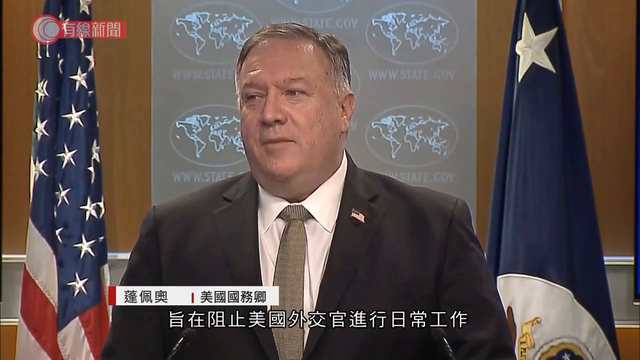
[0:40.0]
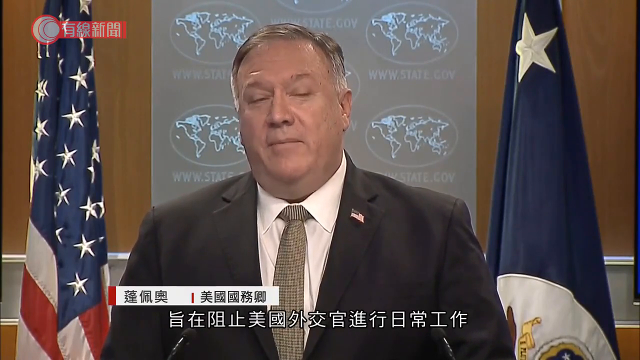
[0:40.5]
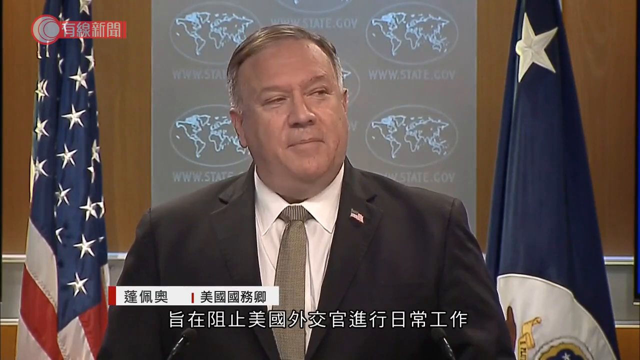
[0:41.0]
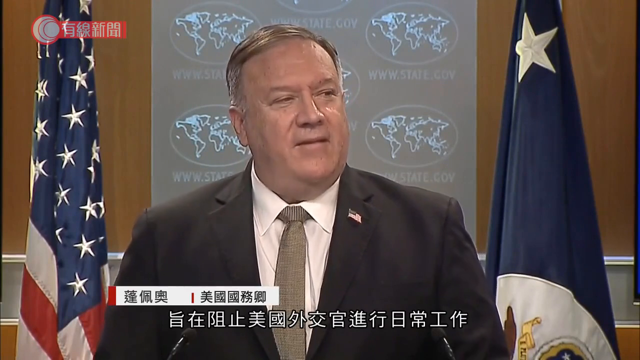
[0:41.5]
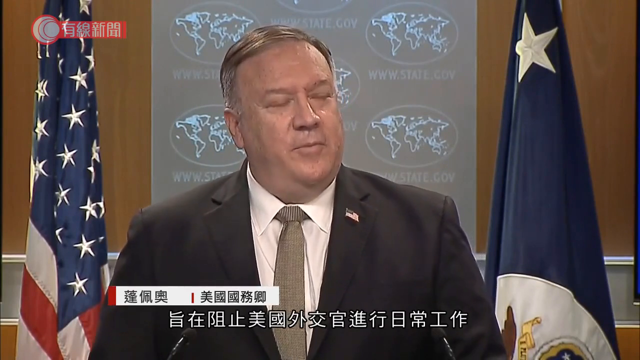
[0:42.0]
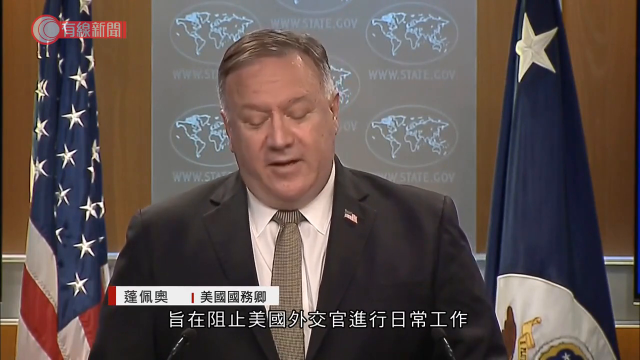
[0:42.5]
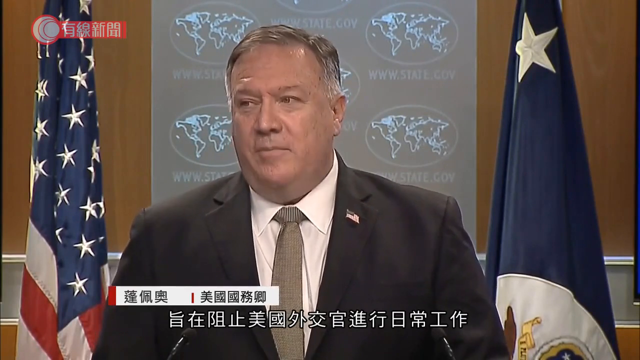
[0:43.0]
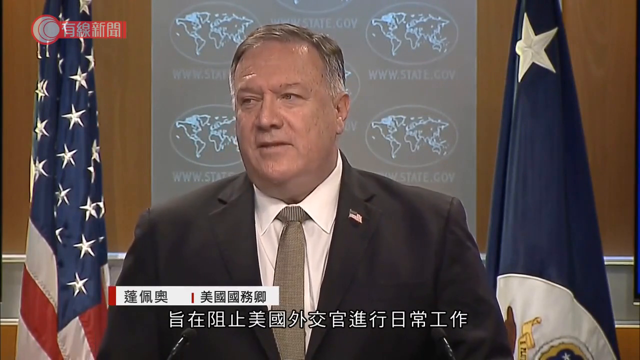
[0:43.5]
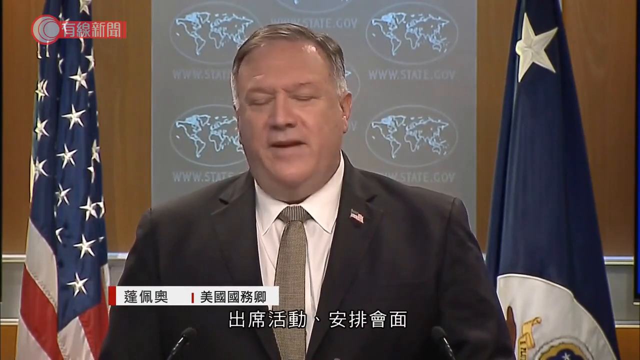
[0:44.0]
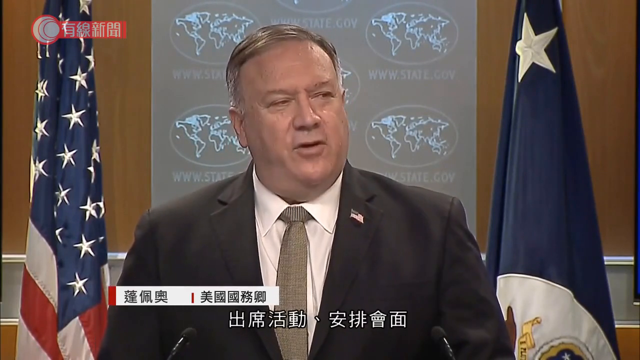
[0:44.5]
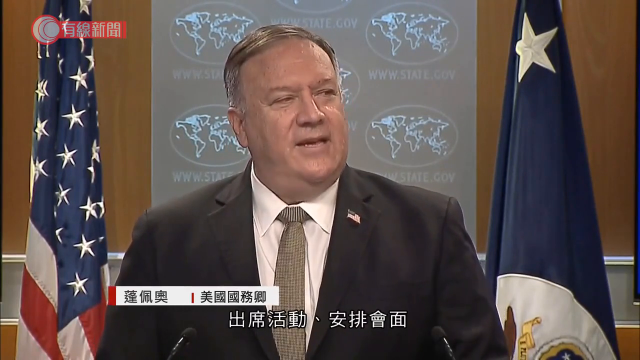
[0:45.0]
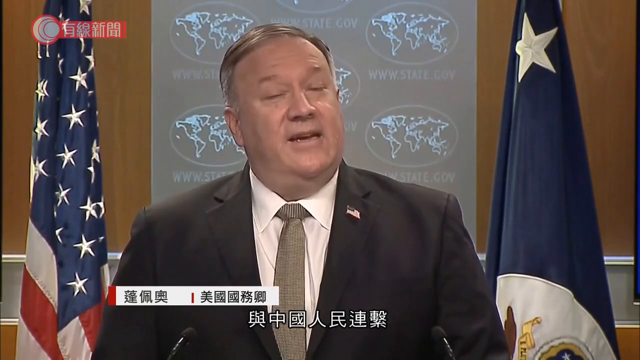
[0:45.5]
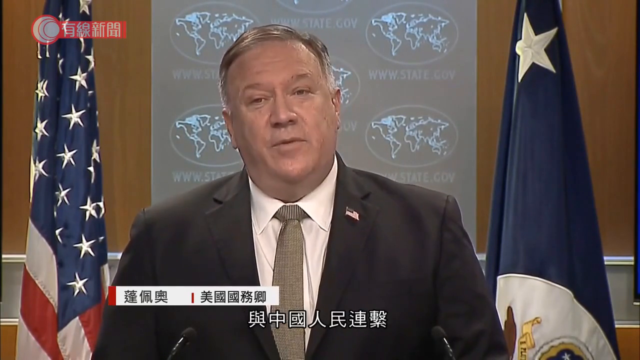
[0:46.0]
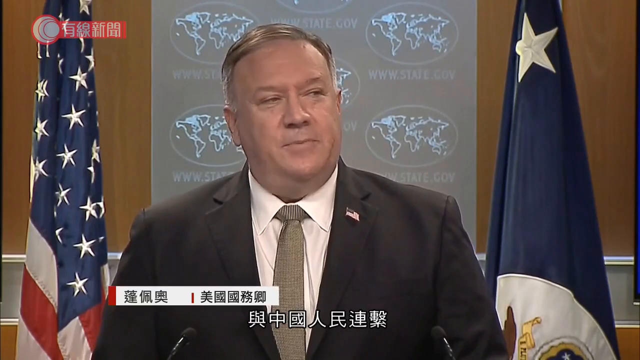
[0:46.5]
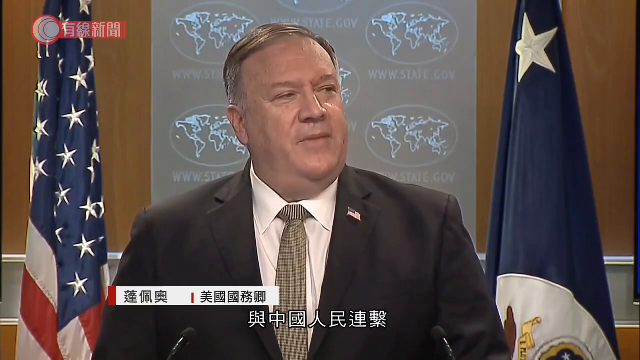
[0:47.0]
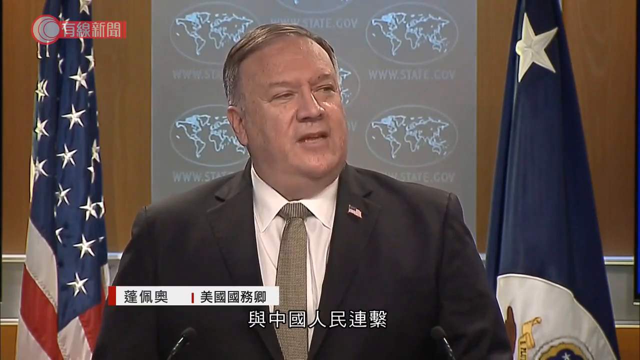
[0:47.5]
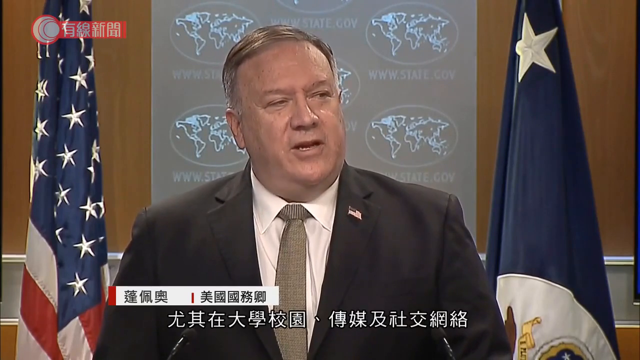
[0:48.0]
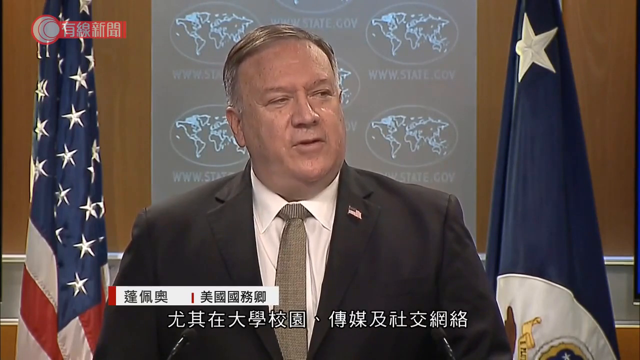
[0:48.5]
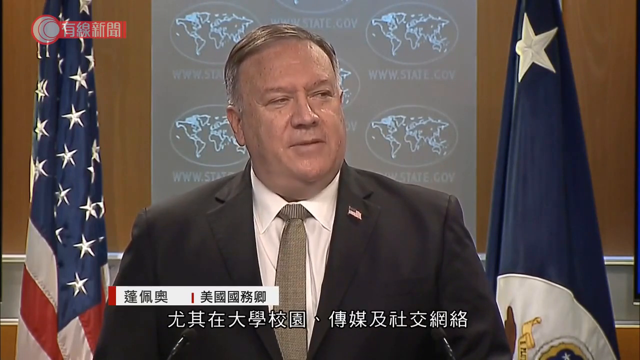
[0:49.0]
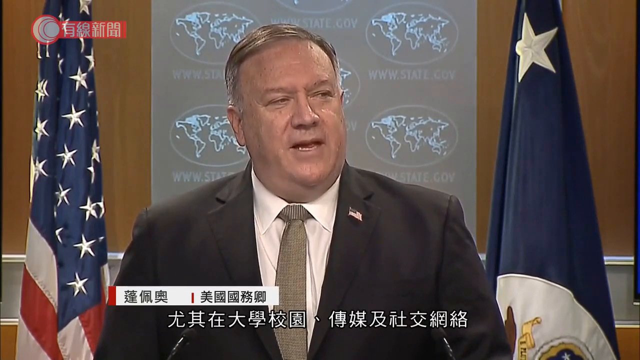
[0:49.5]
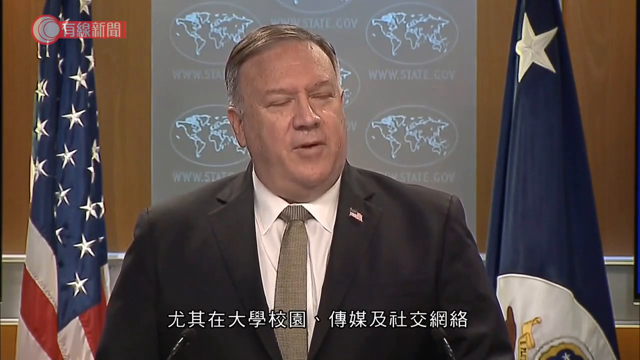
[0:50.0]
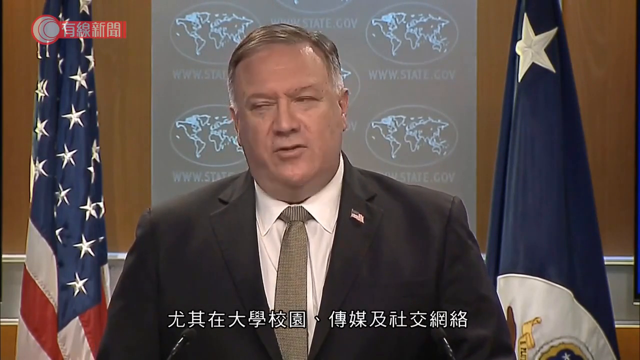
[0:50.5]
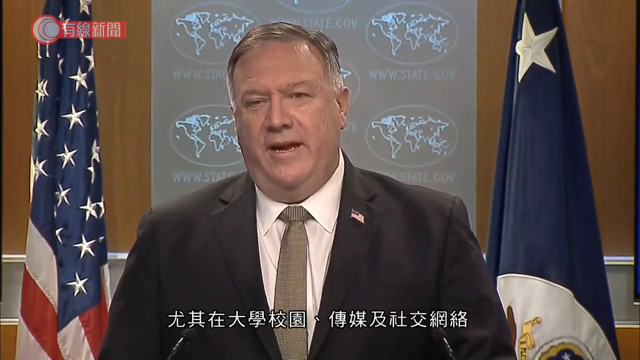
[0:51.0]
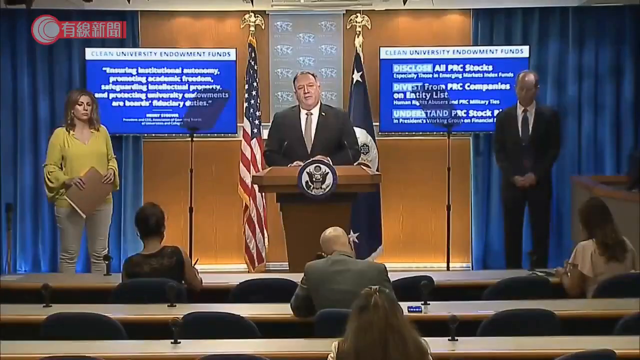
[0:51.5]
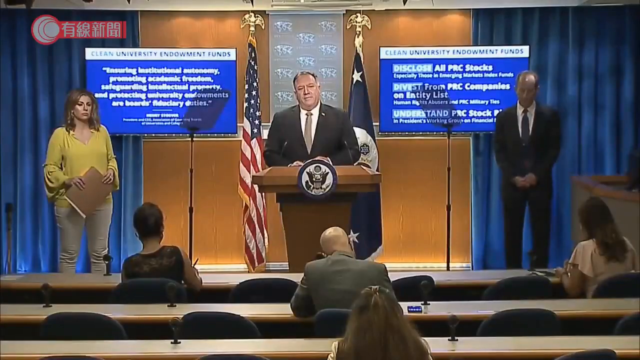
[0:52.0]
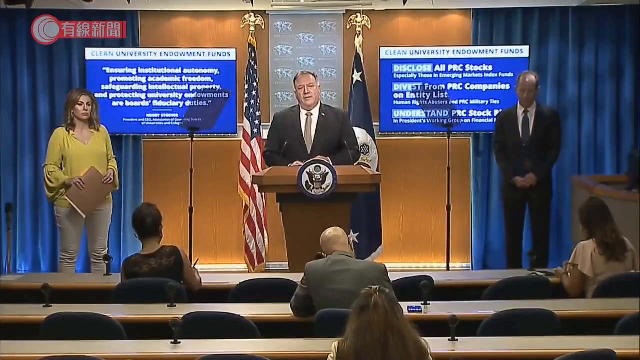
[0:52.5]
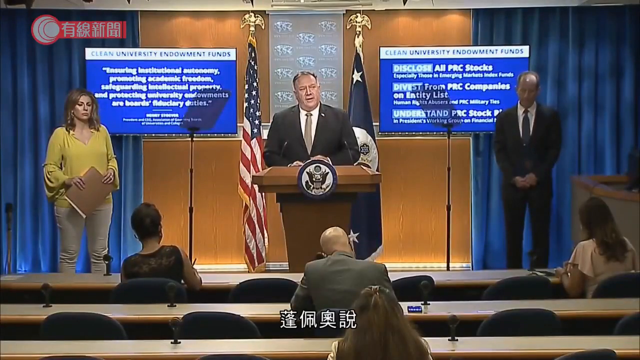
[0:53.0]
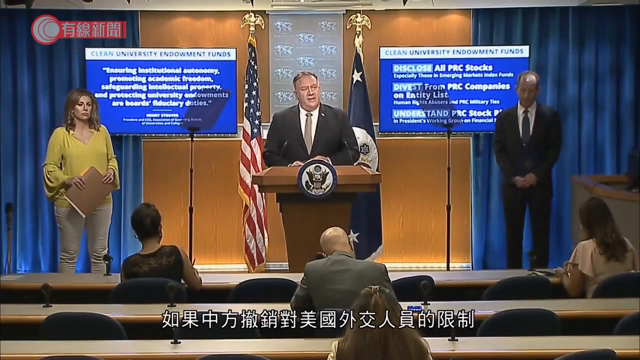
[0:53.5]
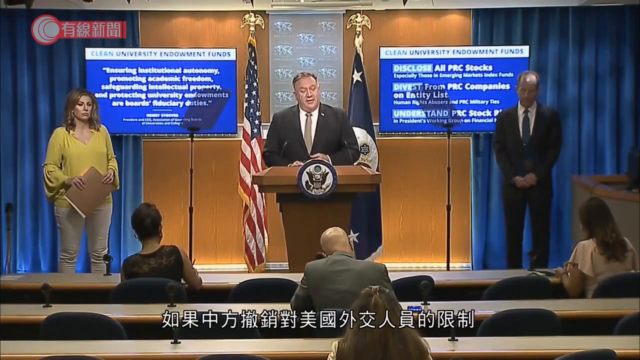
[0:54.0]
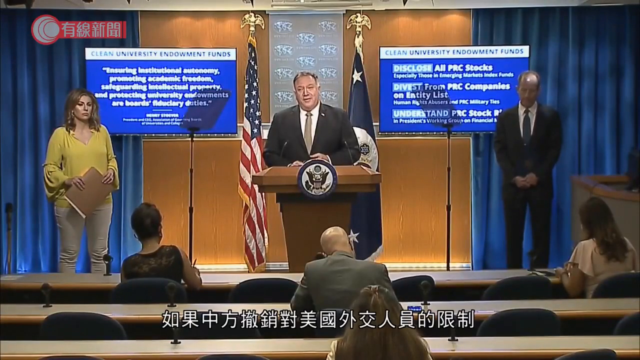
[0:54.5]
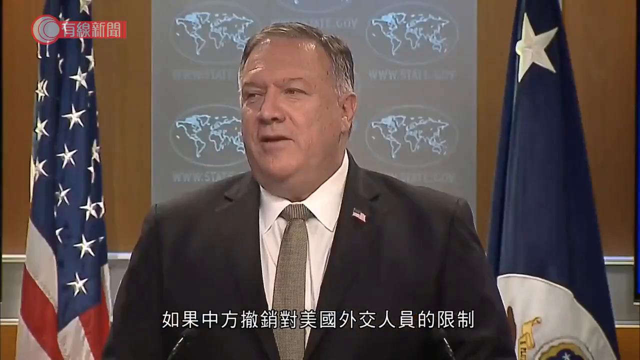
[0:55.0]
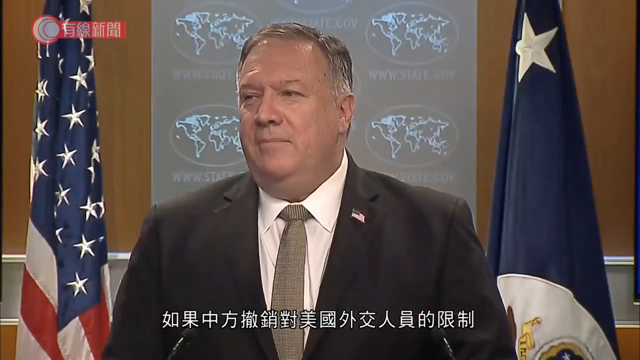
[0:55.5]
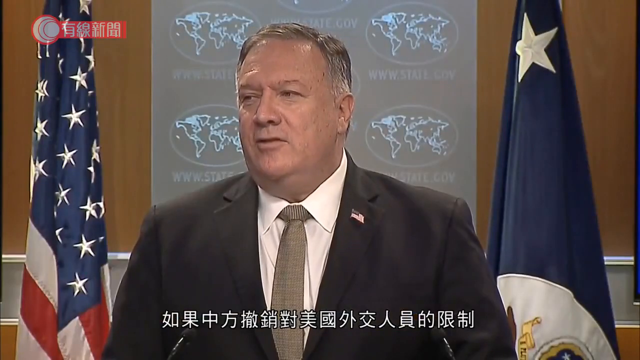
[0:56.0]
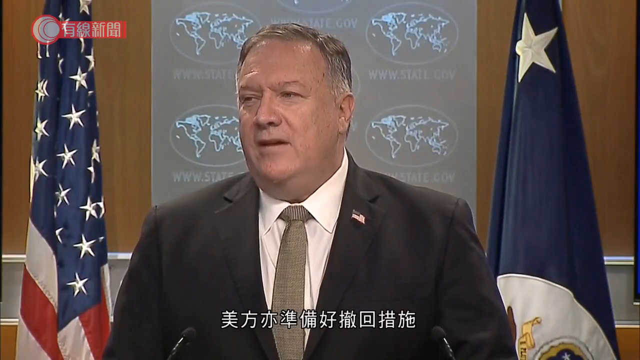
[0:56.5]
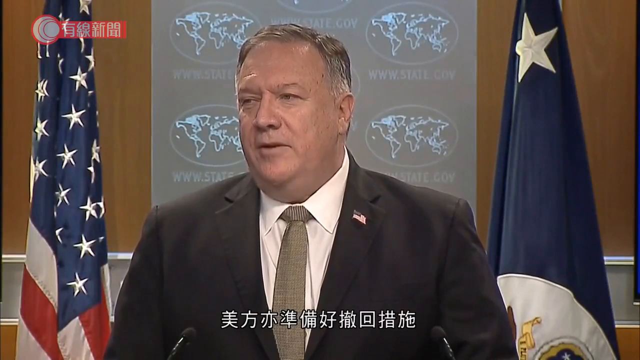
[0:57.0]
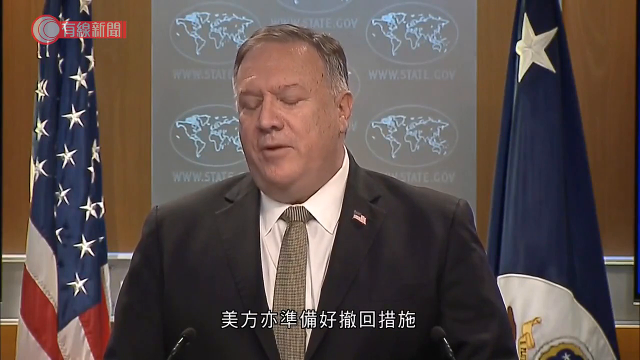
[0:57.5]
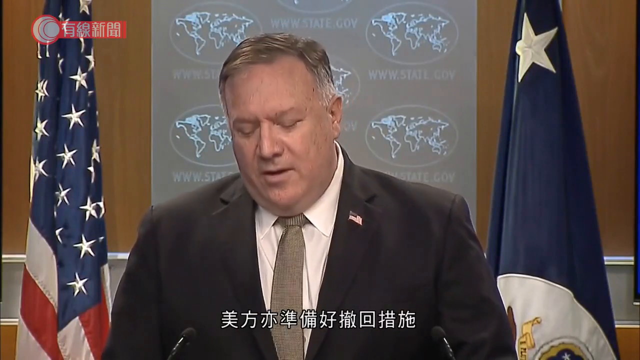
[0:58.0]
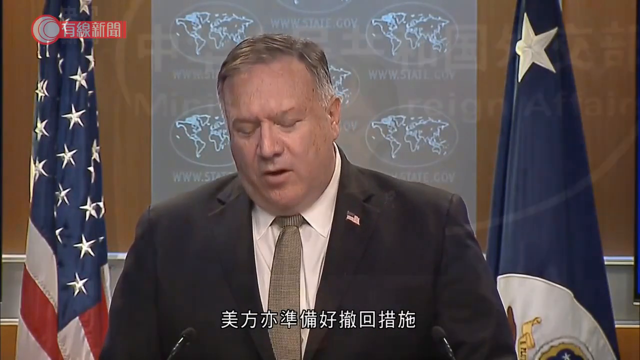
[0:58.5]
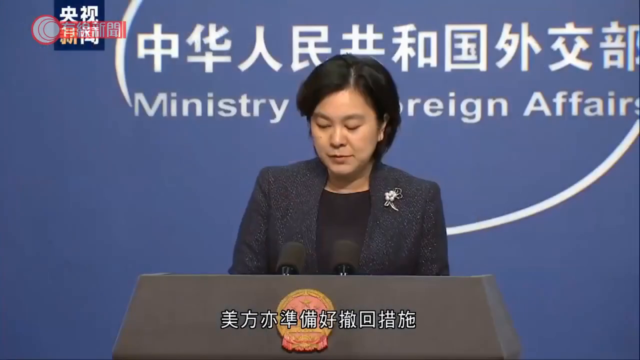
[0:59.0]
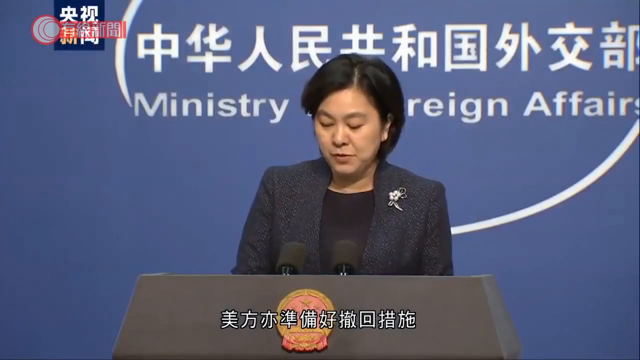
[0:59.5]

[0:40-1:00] The white man in the black suit and gray tie continues speaking, with Chinese subtitles still at the bottom. On stage with him, on the left-hand side, is a woman in a yellow shirt and tan pants, and on the right-hand side is a man in a black suit looking towards the floor. Four people, likely reporters, are in the audience, seated quite a distance apart, which apparently suggests COVID times. At the end, there is a snippet of another press-conference-like scene with a woman speaking at a podium, and behind her it says "Ministry of Foreign Affairs".